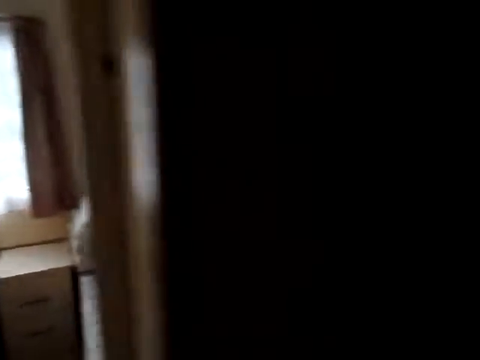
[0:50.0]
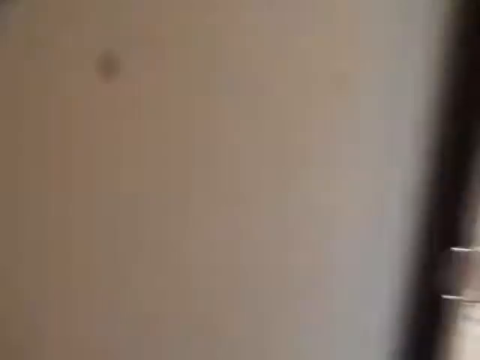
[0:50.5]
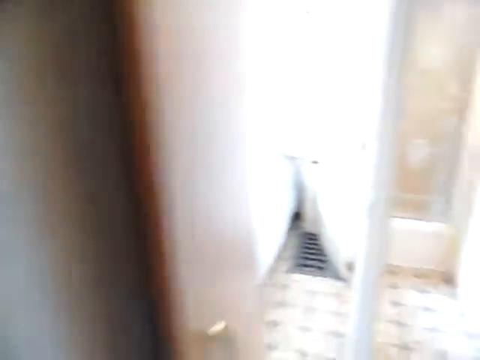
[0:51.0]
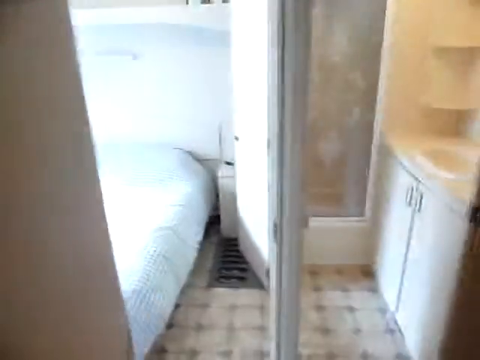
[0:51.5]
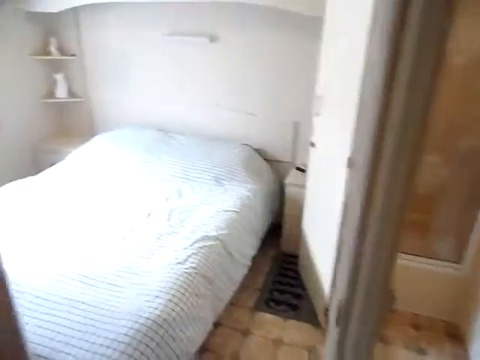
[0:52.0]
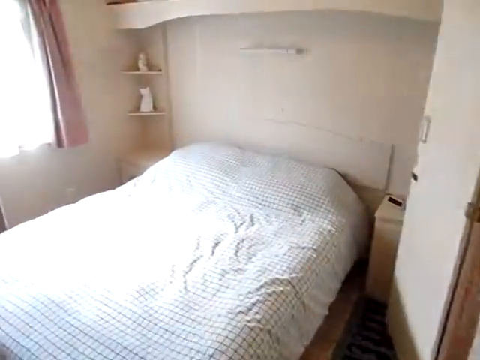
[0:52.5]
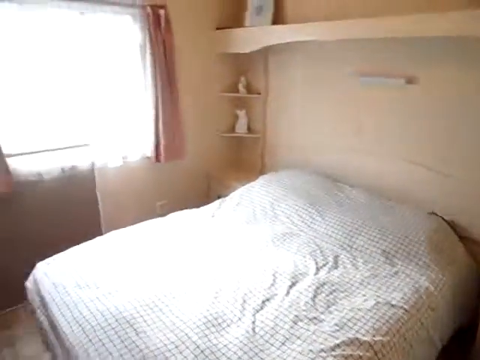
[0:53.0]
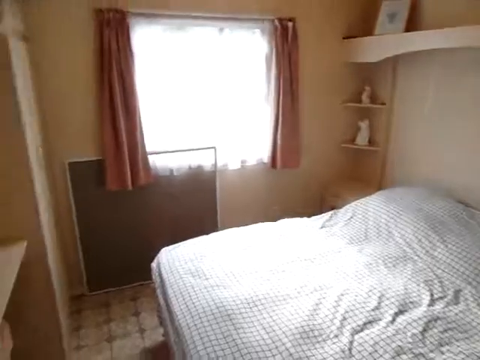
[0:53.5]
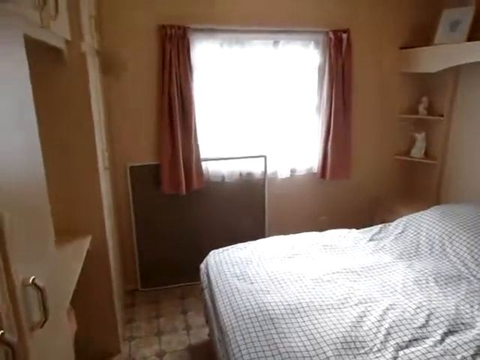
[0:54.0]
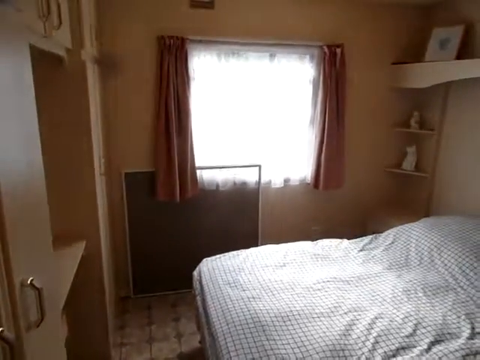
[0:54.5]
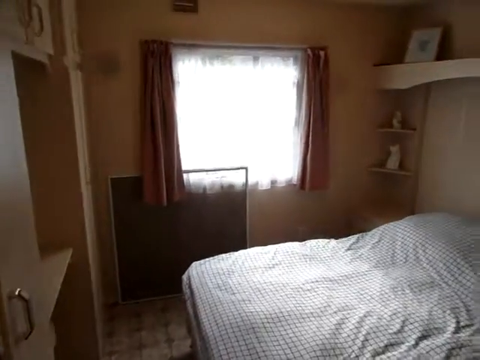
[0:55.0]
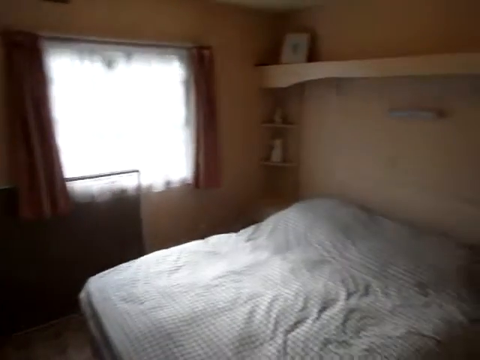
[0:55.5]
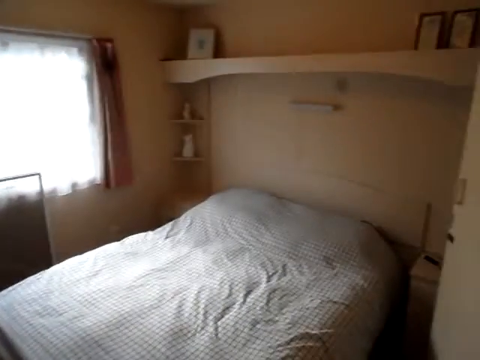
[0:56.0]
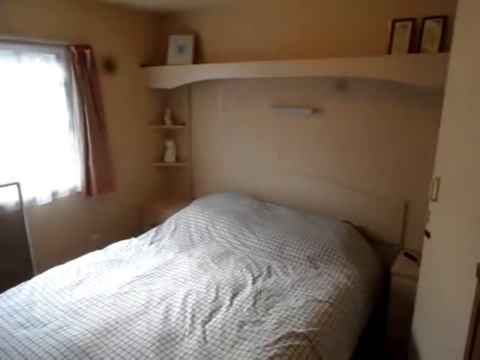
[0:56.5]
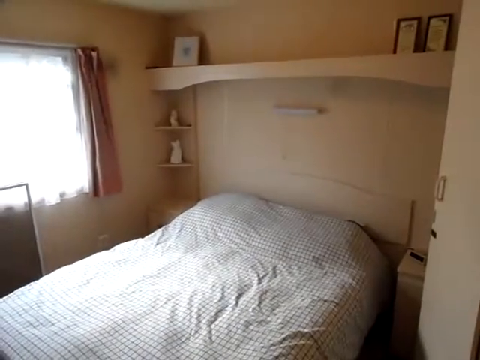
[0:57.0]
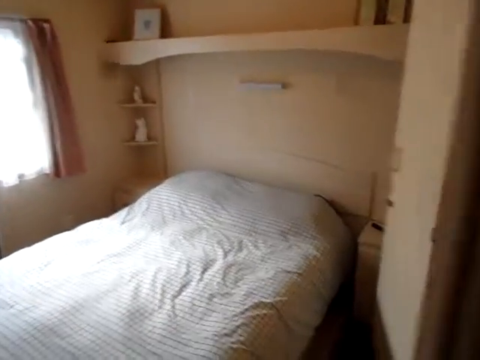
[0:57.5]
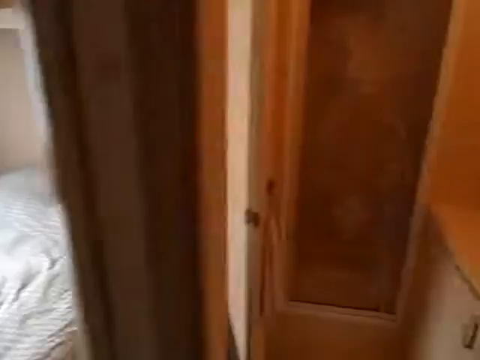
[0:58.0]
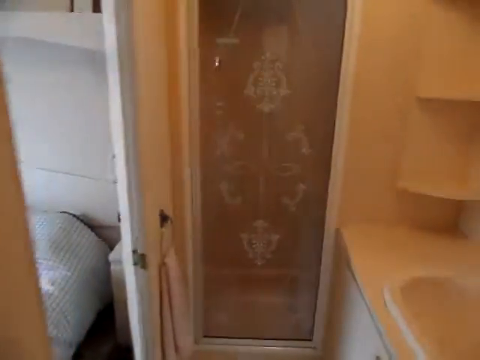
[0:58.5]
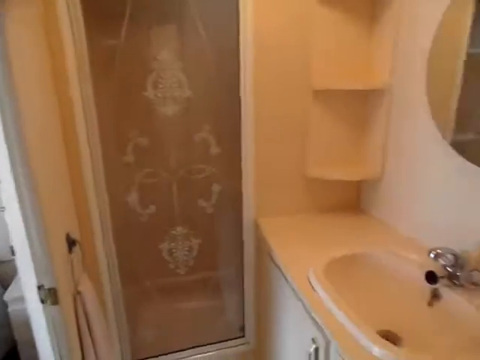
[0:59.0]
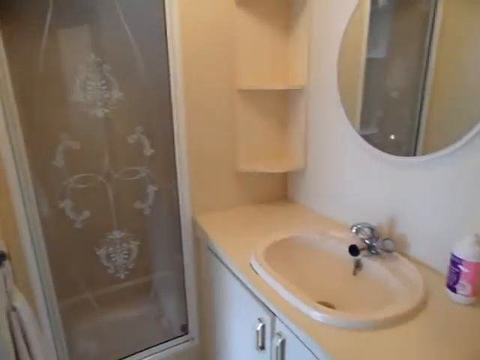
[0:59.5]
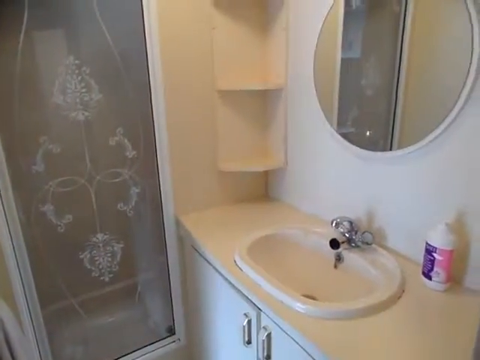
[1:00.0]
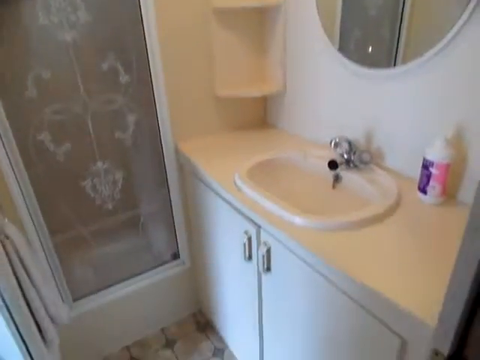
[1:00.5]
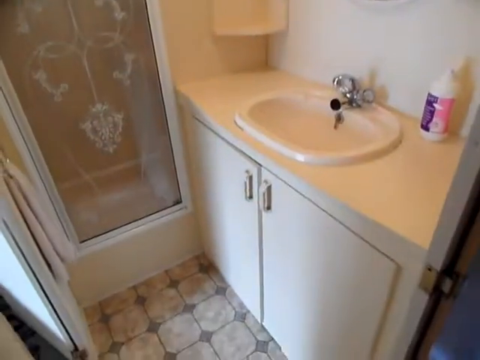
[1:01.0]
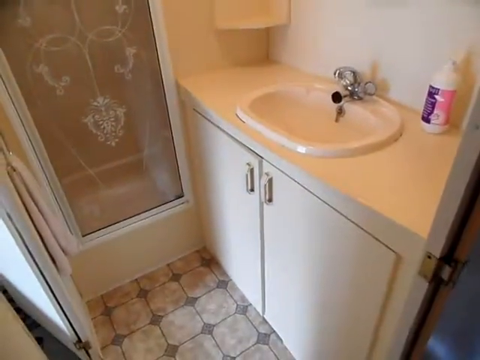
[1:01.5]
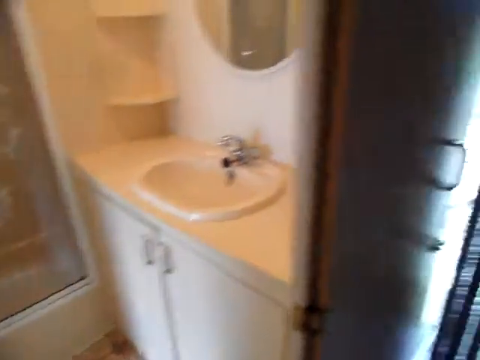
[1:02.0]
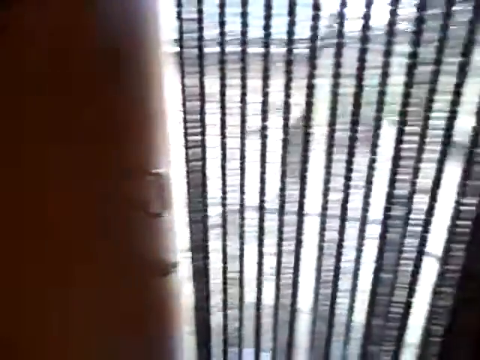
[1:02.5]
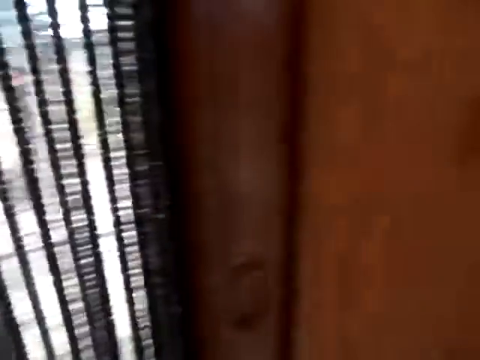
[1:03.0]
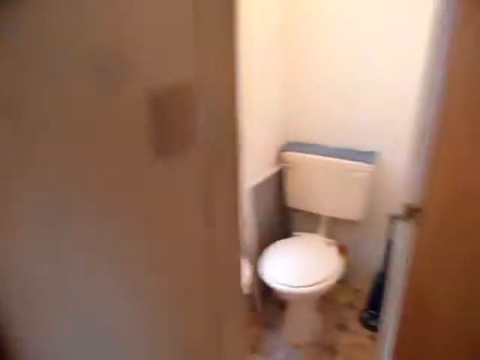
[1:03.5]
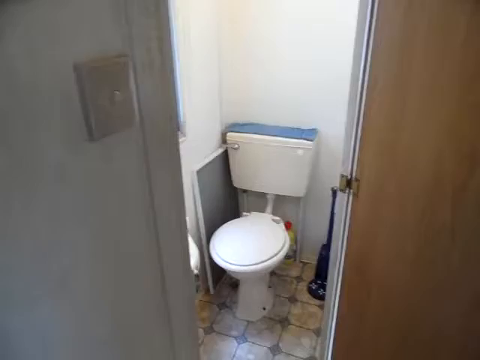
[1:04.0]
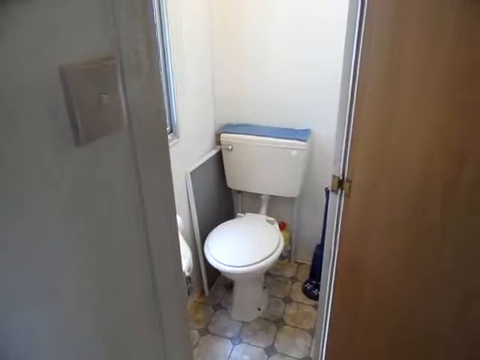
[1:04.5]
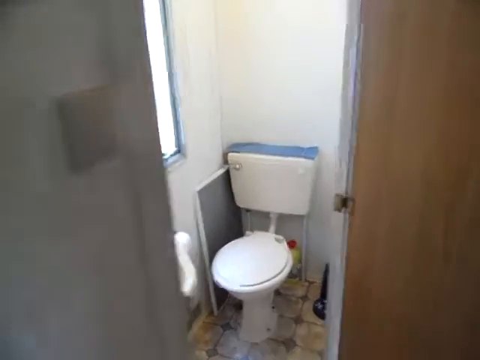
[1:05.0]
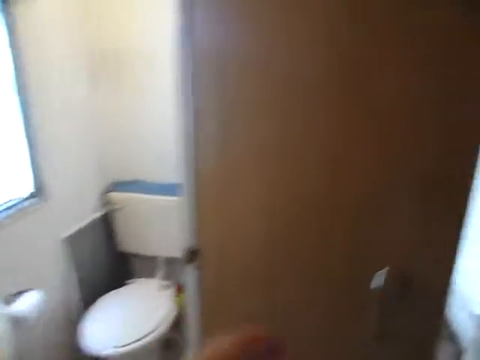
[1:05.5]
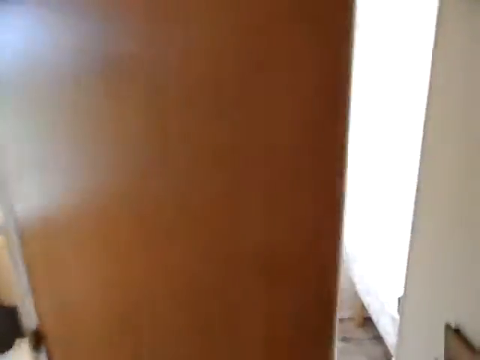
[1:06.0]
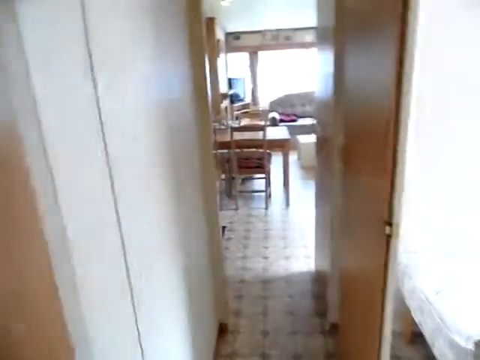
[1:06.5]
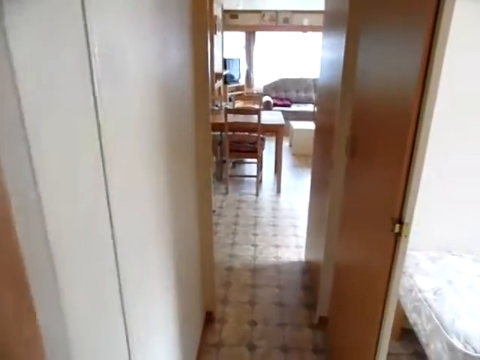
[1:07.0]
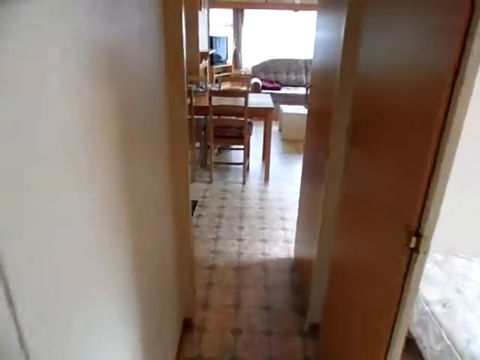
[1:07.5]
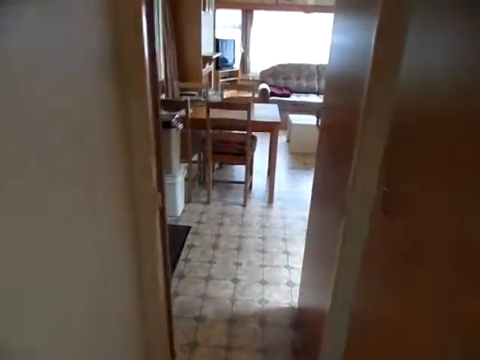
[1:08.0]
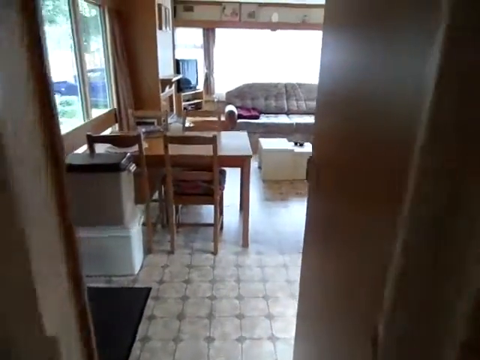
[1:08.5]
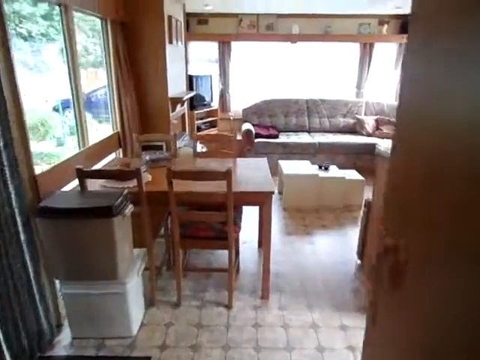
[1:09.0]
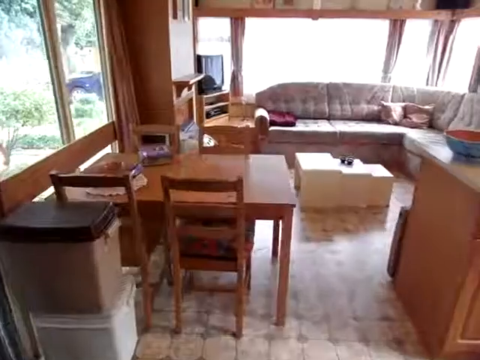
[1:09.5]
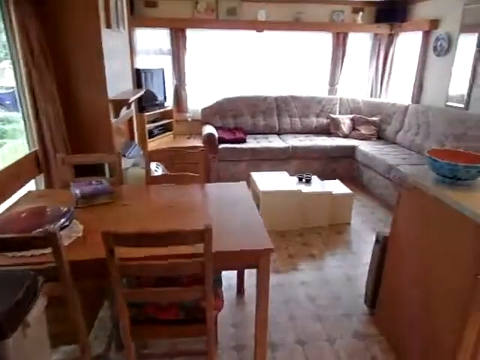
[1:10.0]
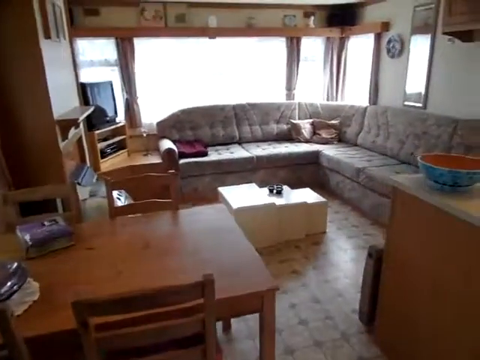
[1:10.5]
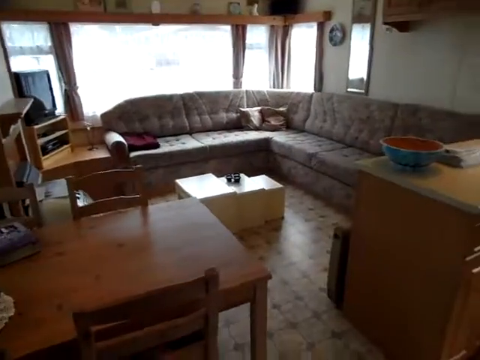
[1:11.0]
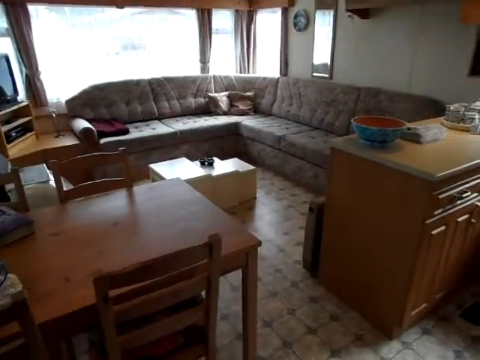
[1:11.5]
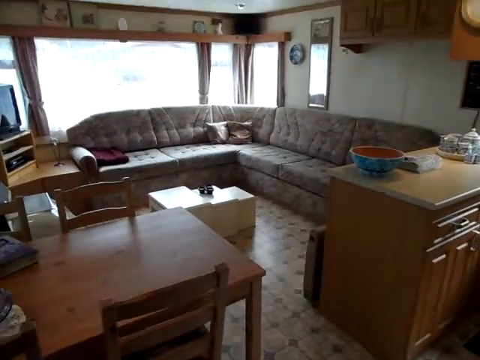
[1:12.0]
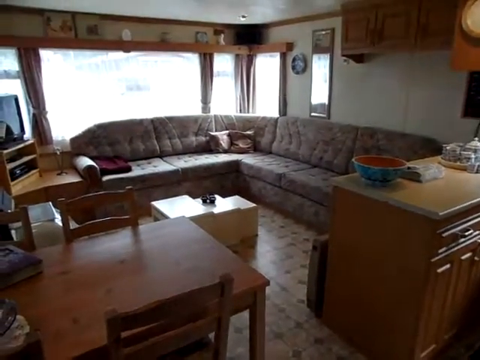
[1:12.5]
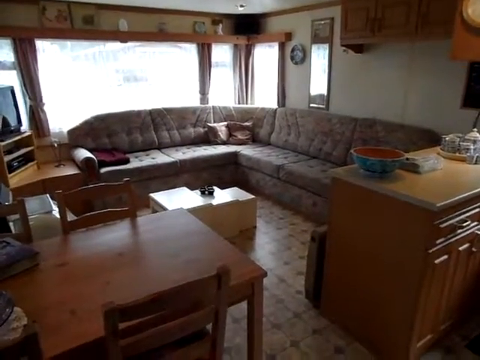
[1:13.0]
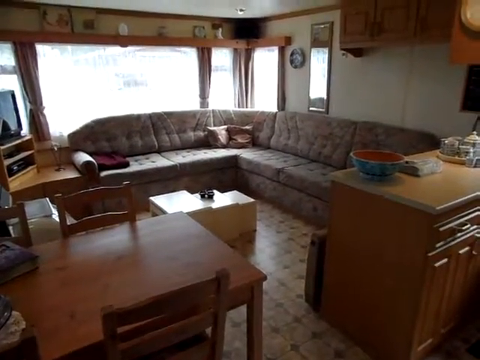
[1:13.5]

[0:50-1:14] The footage shows the inside of some type of trailer, with a bed, many windows on the side wall, a sink, a desk and drawer, and a shower, all kind of smushed together into one area. The camera quality is not high: there is a lot of pixelation, and the shading in some of the darker areas has low grain density.